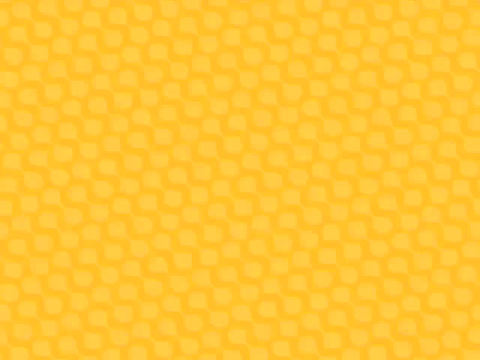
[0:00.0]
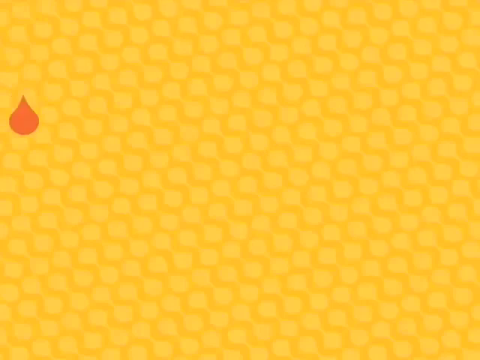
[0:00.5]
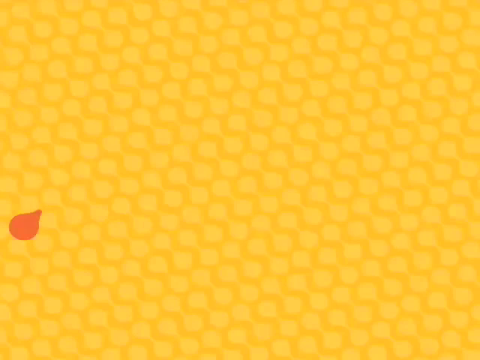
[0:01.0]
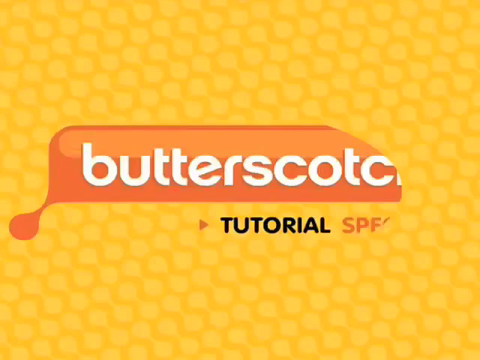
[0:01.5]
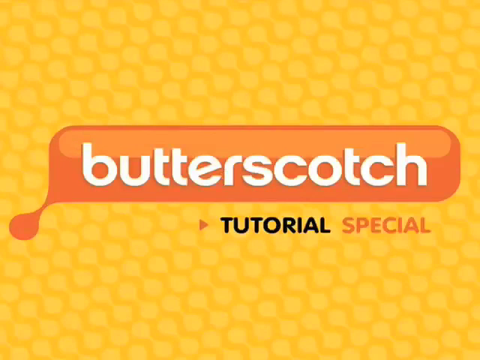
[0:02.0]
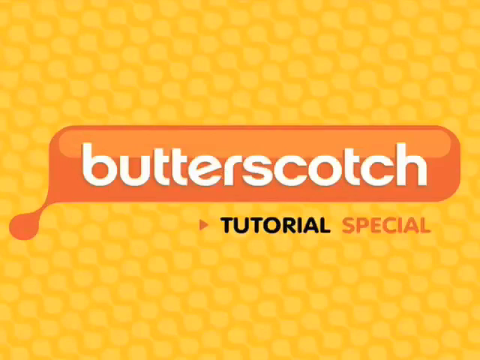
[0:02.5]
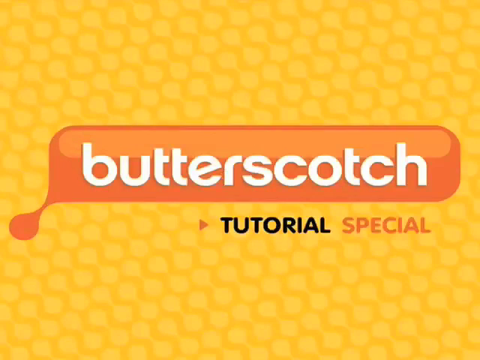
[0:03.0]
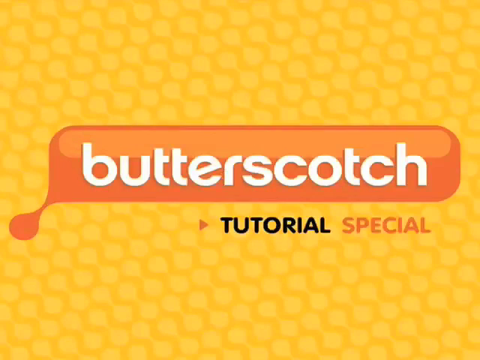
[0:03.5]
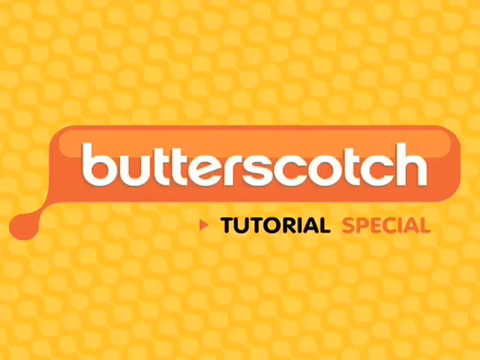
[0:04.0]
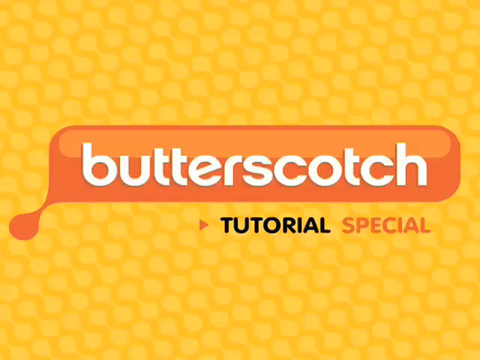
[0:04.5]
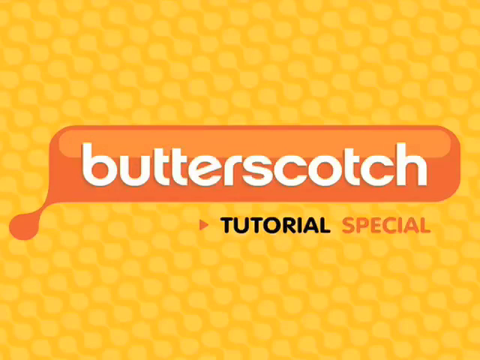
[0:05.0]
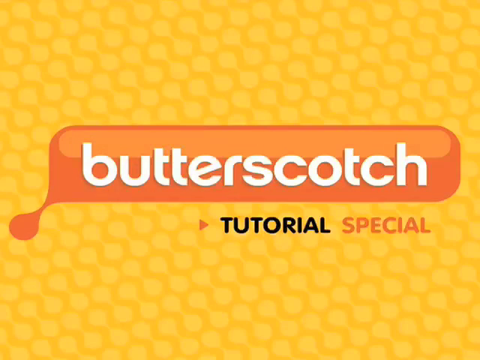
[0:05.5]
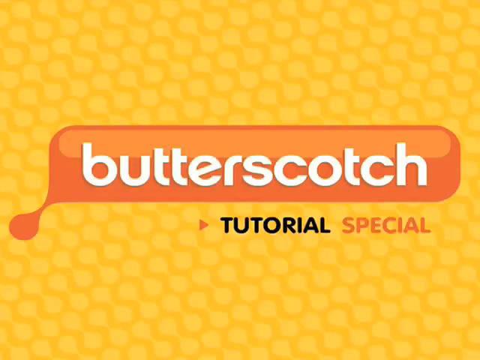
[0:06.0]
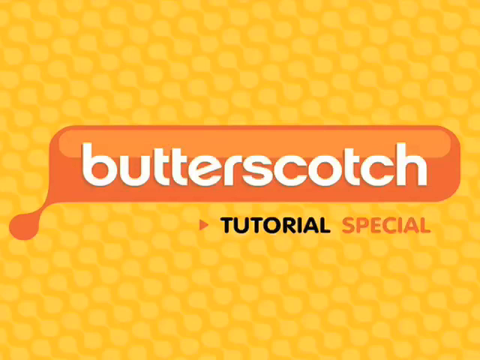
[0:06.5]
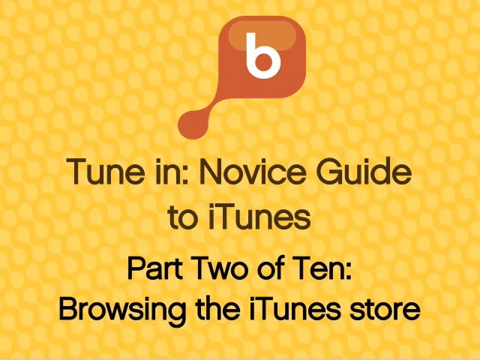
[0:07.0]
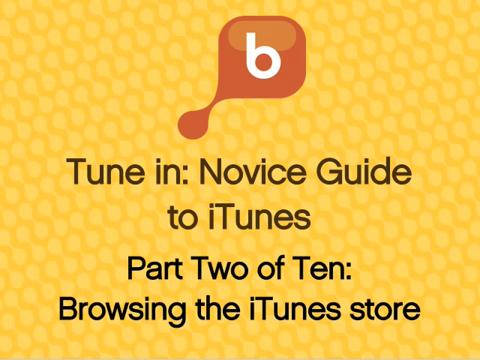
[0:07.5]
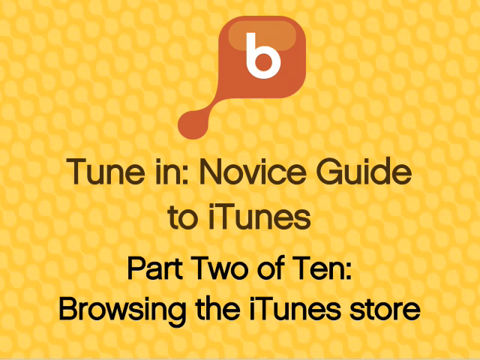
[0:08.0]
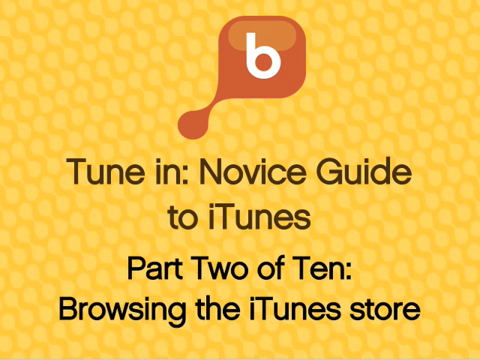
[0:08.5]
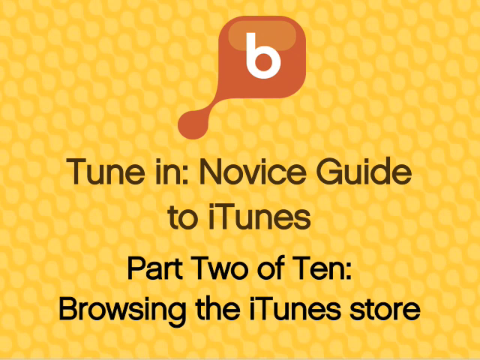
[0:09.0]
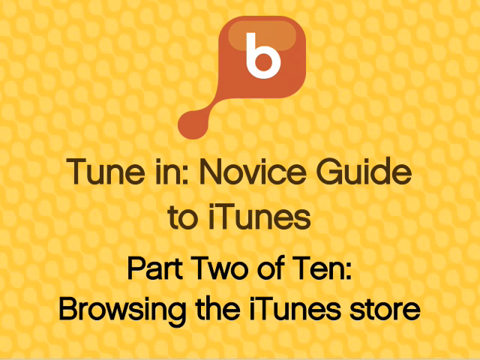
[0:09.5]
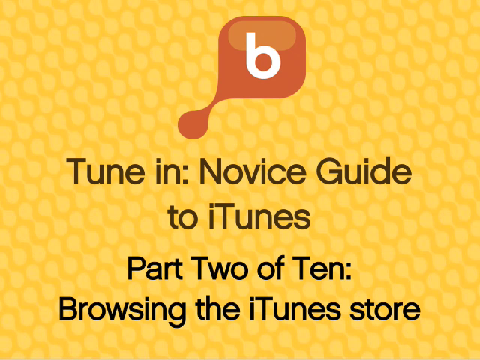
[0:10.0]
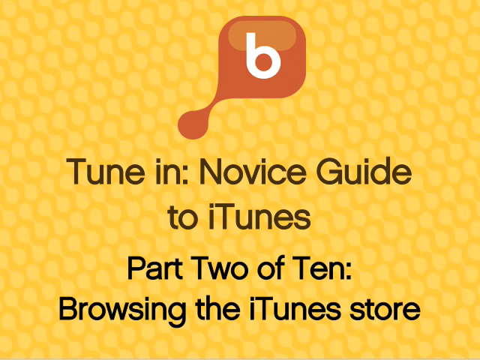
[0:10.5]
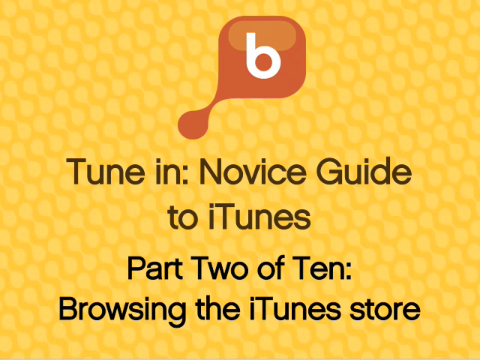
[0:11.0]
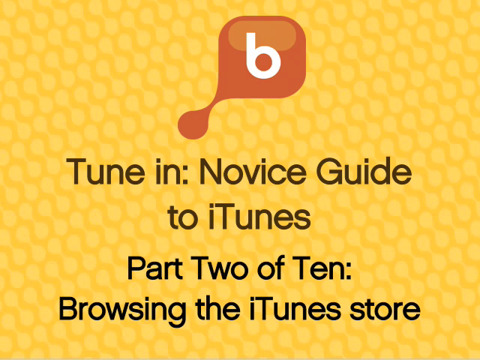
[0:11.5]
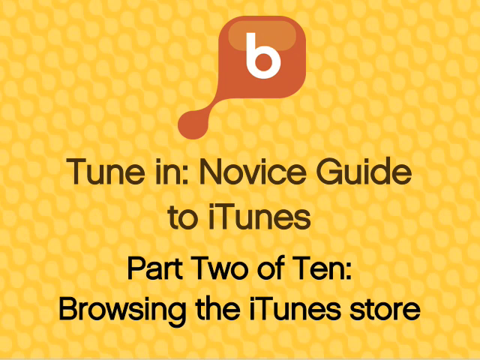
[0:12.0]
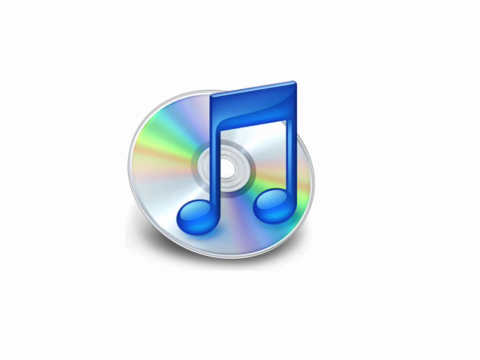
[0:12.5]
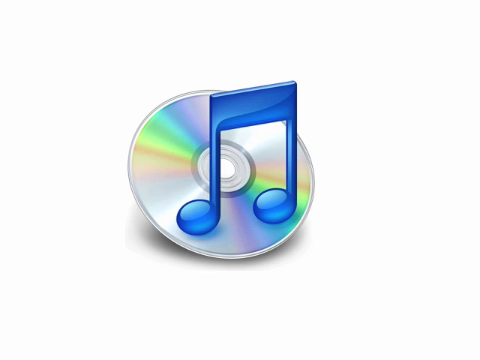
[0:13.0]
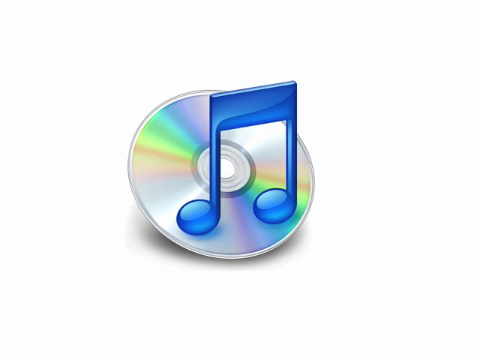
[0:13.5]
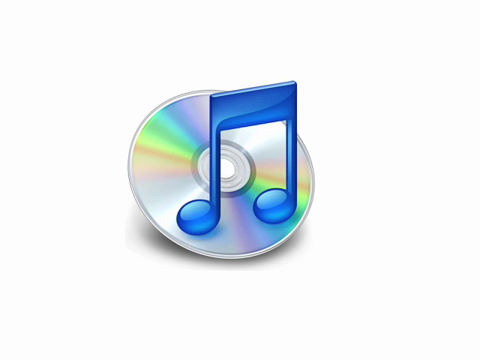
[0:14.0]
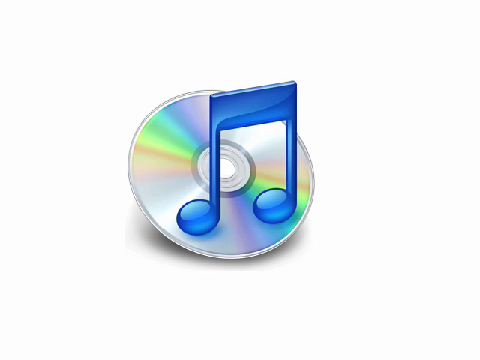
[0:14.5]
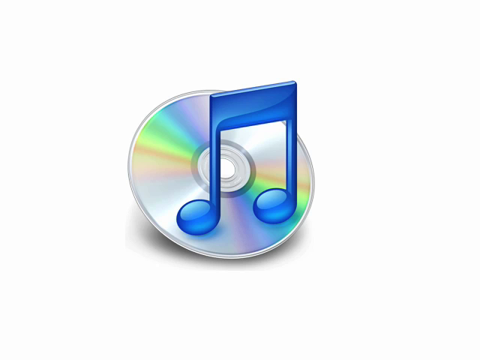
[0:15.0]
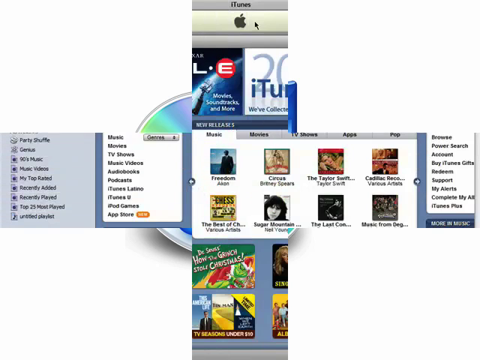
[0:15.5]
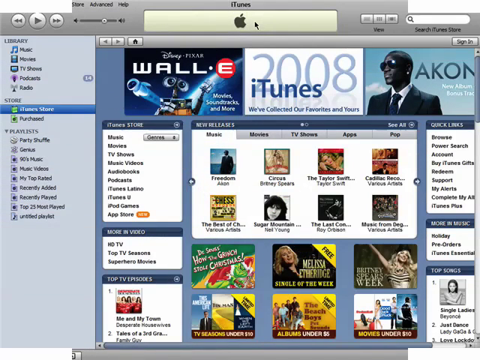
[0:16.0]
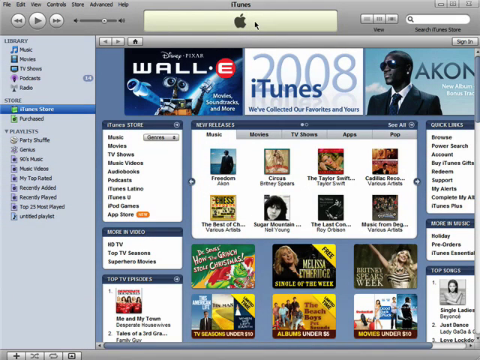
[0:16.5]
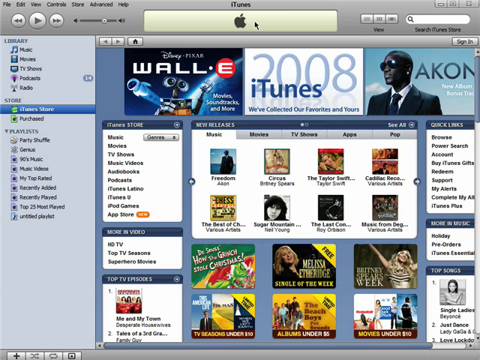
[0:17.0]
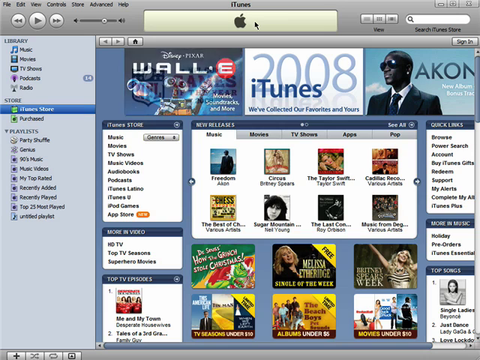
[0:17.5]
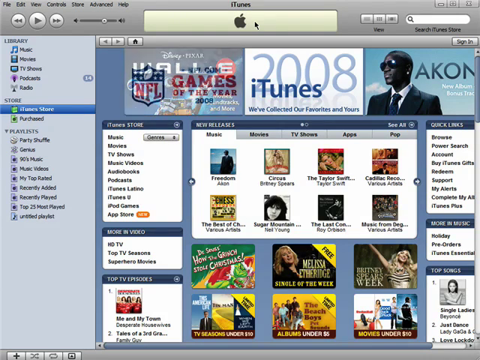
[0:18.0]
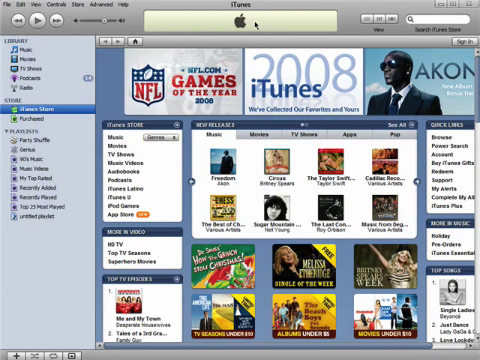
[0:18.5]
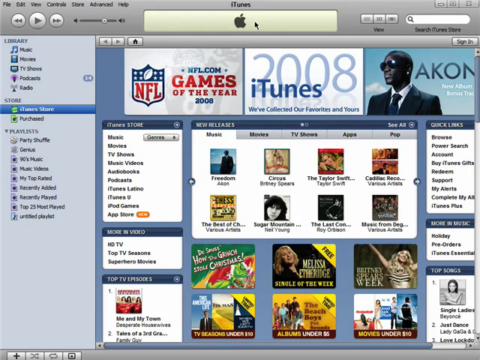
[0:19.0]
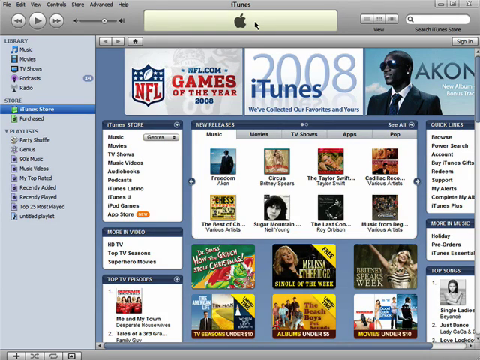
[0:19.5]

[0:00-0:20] The video opens on a yellow screen, followed by the logo of a brand called Butterscotch, orange with white letters, with "Tutorial Special" written underneath. Another yellow-background screen follows, reading "Tune in: Novice guide to iTunes Part 2 of 10 Browsing the iTunes Store." Next comes a view of the back of a CD, the side that faces the reader, with a blue music symbol on top of it. The scene then moves to the iTunes Store, where categories for music, movies, TV shows, music videos, audiobooks and podcasts are visible. There are also new releases, a browse option, options to buy iTunes gifts or redeem, and a support button. Some music records appear on the screen, such as Taylor Swift records and an album called Freedom.